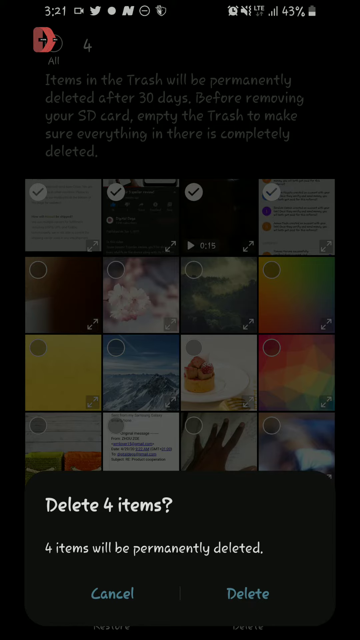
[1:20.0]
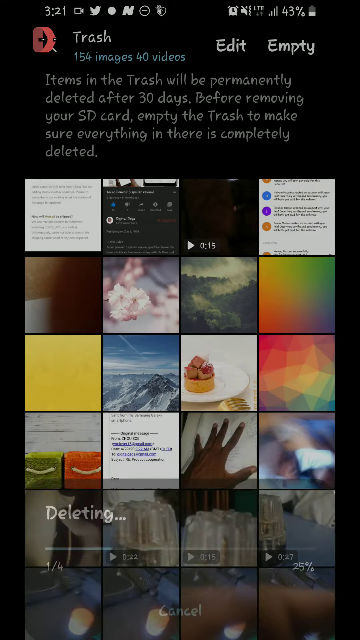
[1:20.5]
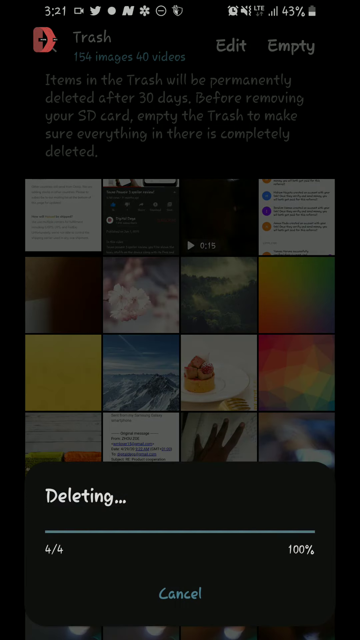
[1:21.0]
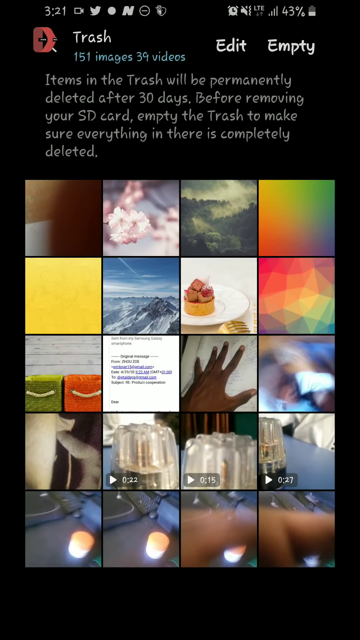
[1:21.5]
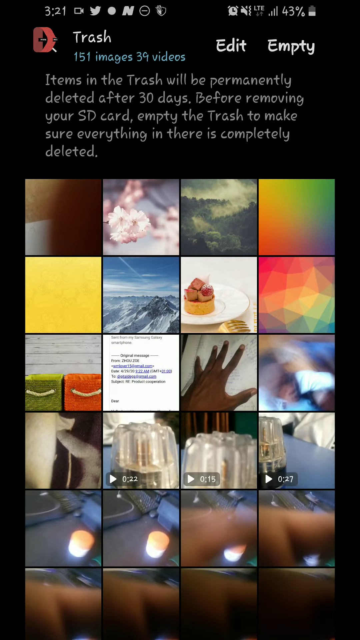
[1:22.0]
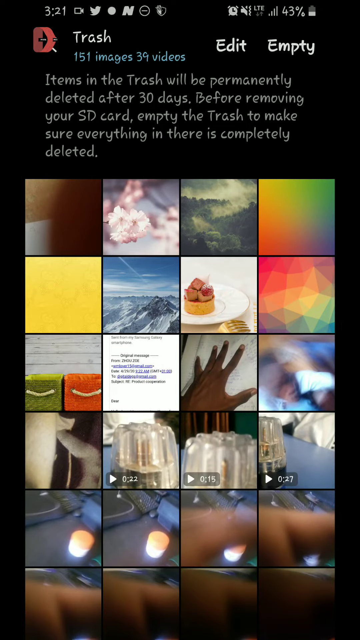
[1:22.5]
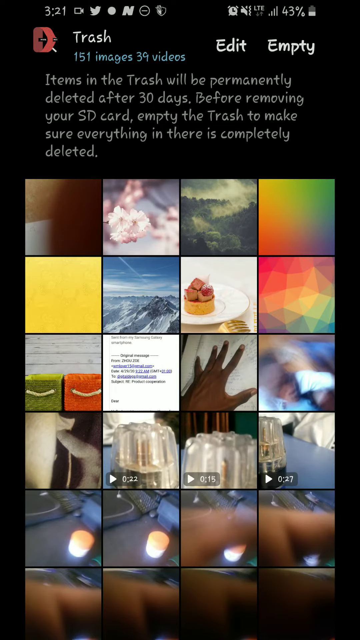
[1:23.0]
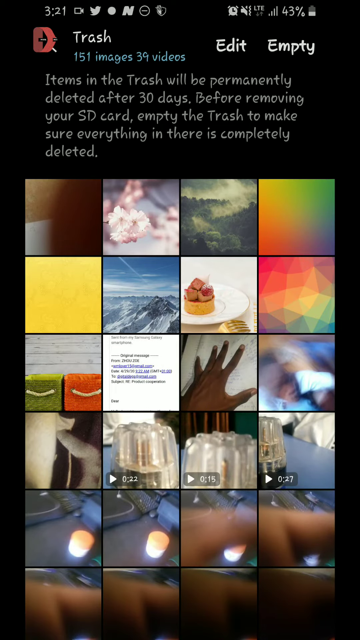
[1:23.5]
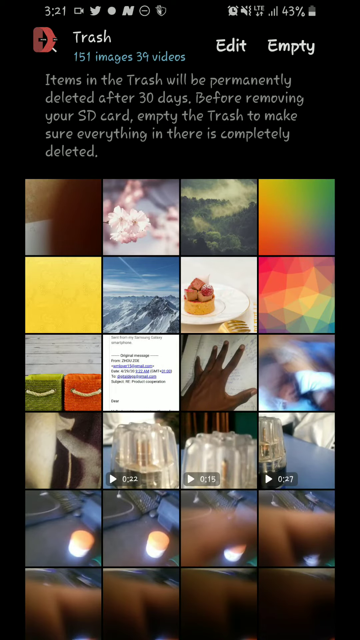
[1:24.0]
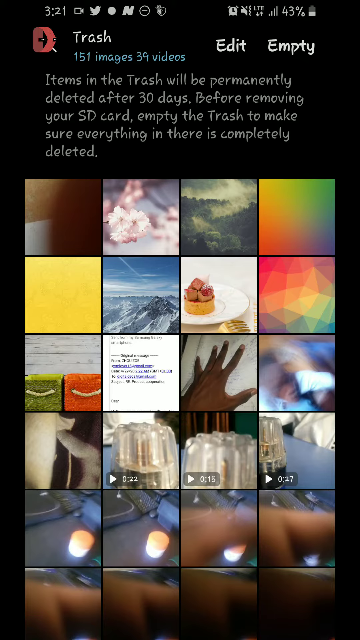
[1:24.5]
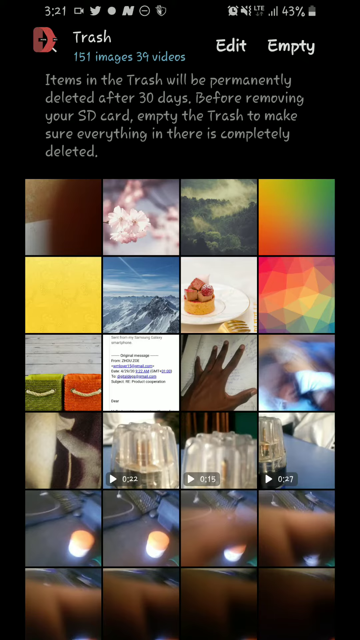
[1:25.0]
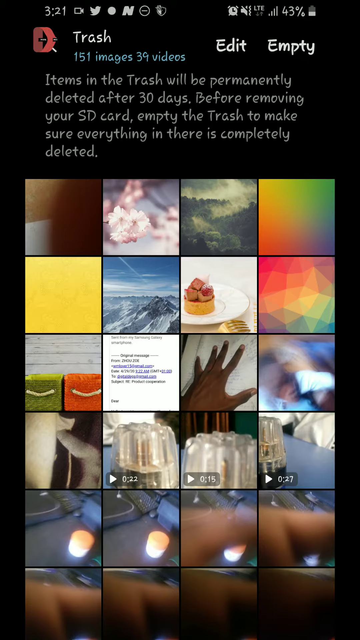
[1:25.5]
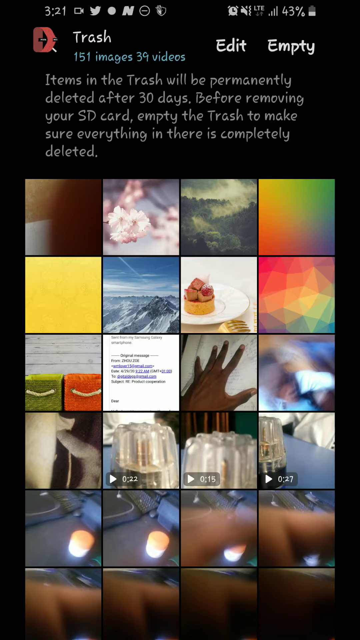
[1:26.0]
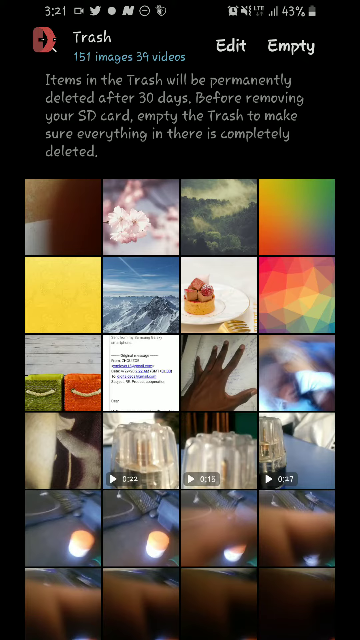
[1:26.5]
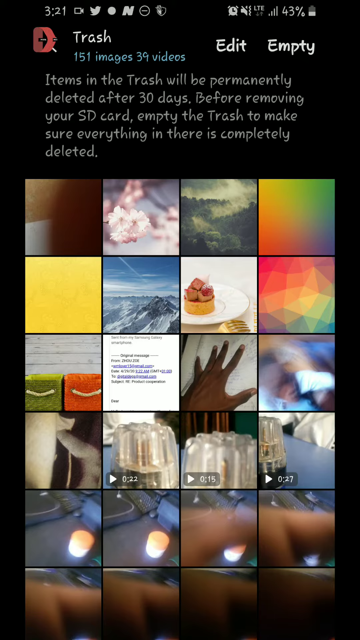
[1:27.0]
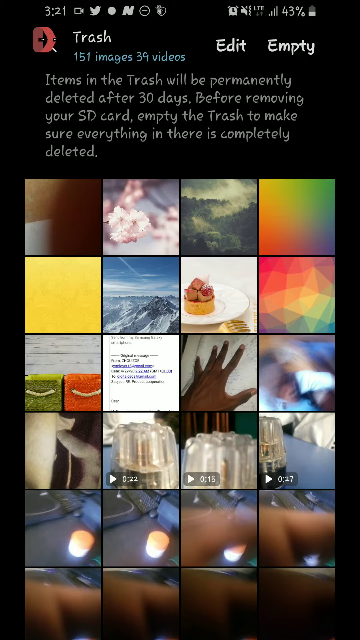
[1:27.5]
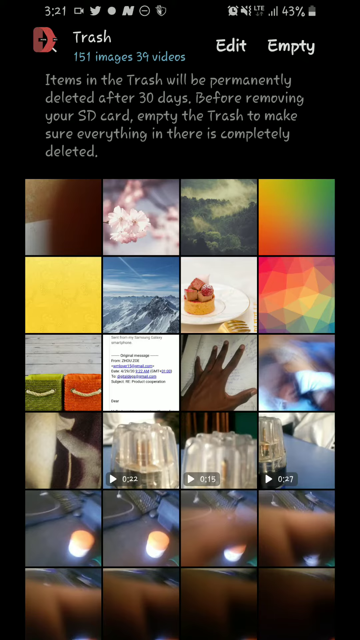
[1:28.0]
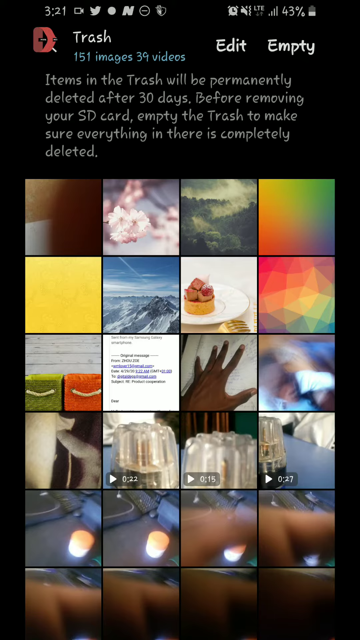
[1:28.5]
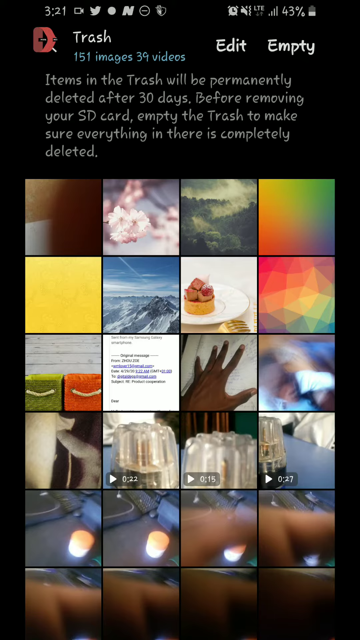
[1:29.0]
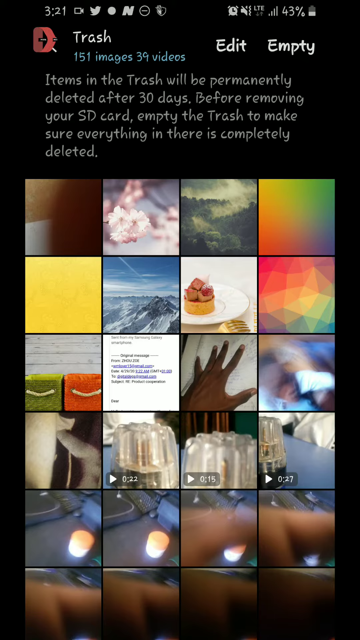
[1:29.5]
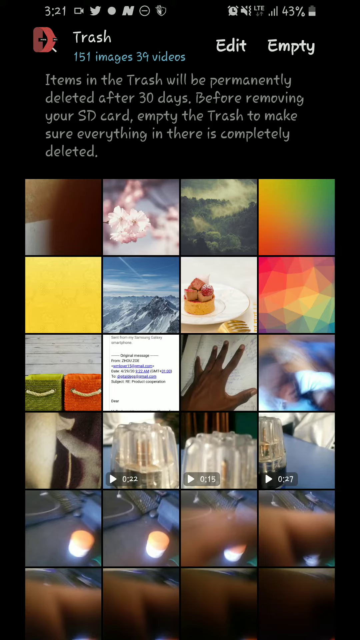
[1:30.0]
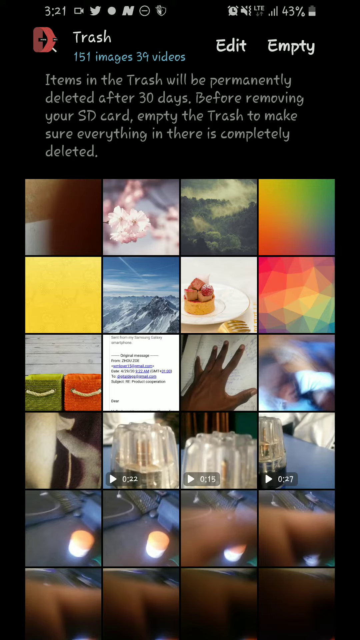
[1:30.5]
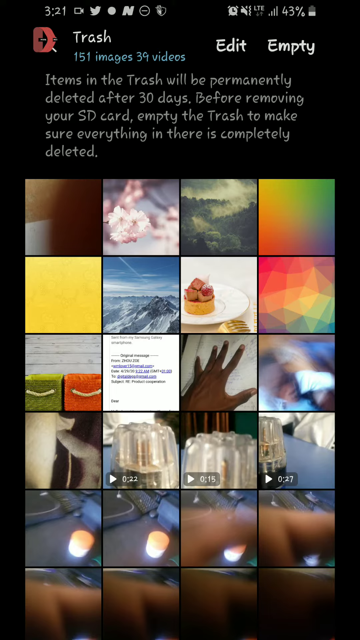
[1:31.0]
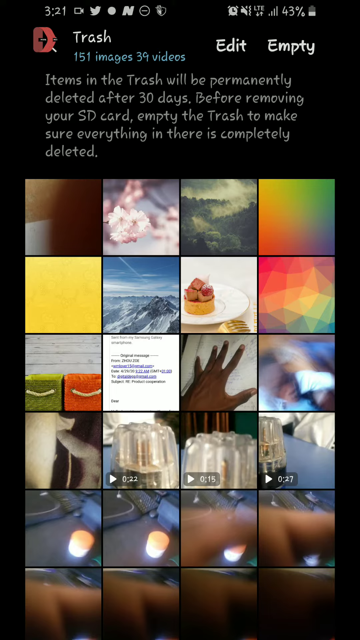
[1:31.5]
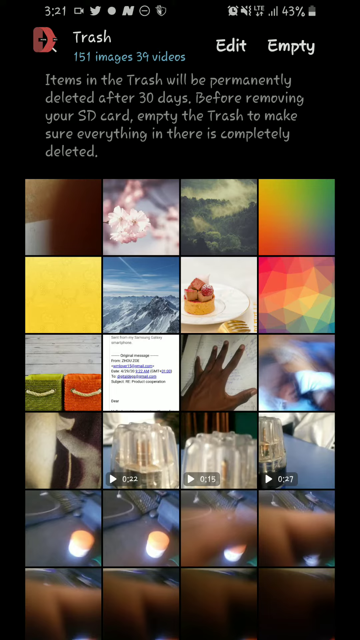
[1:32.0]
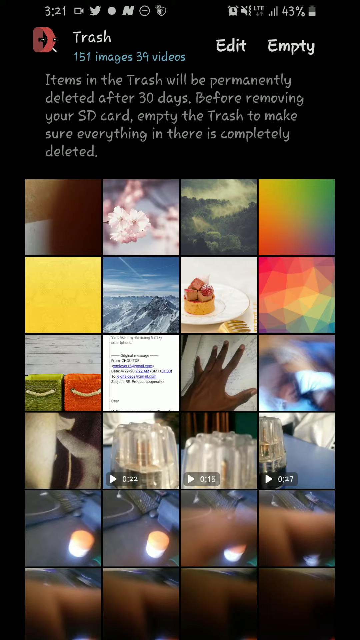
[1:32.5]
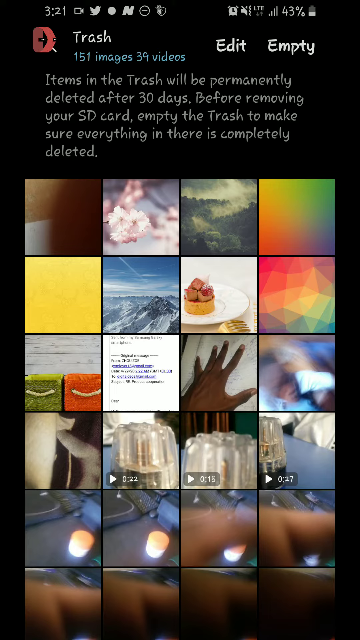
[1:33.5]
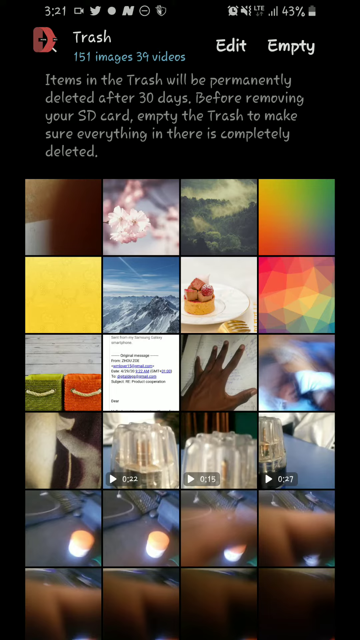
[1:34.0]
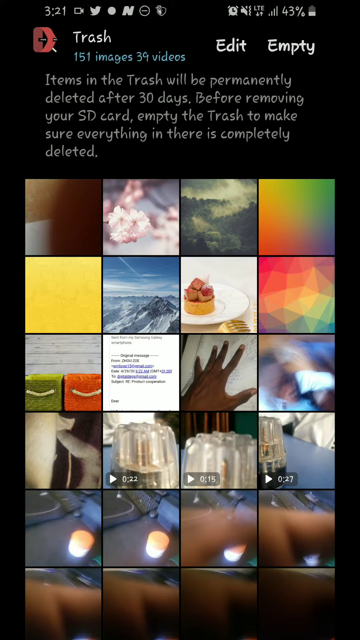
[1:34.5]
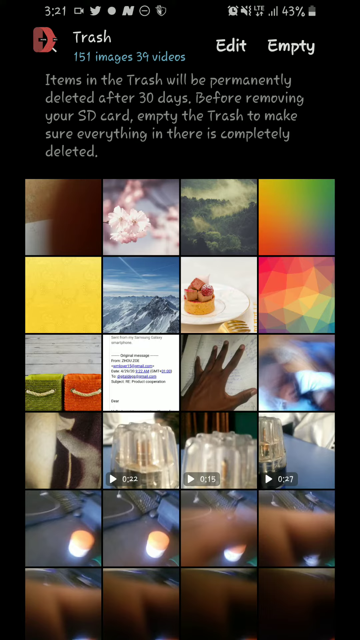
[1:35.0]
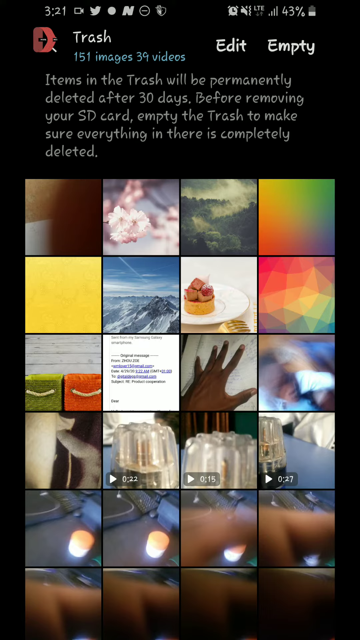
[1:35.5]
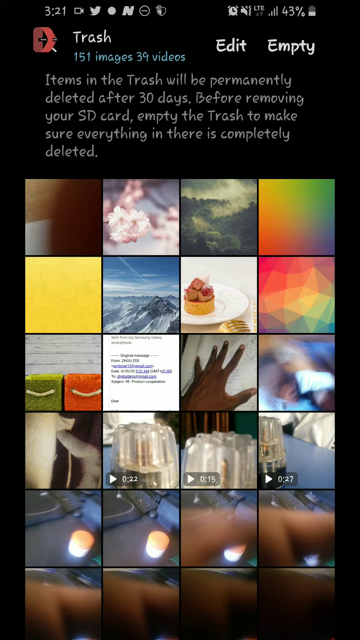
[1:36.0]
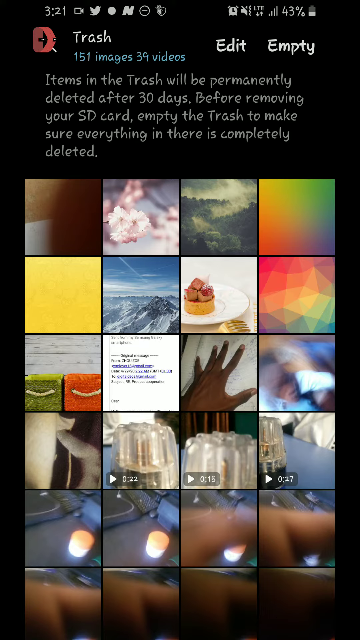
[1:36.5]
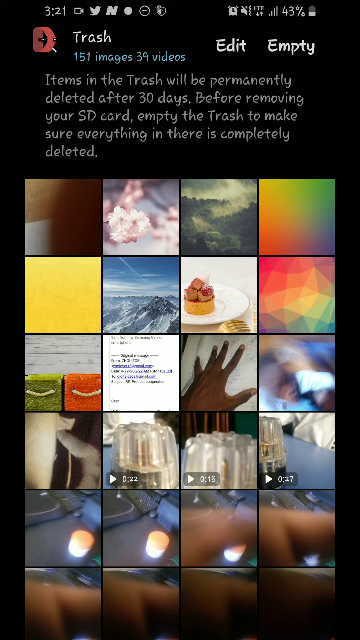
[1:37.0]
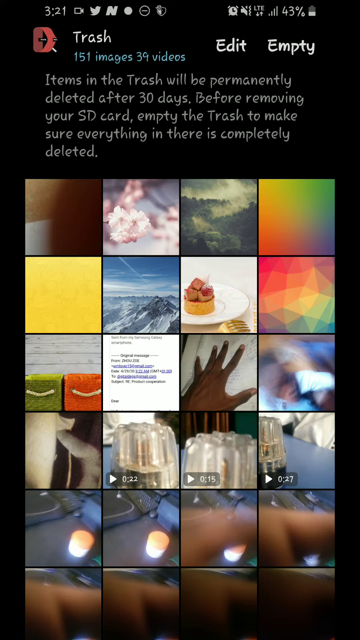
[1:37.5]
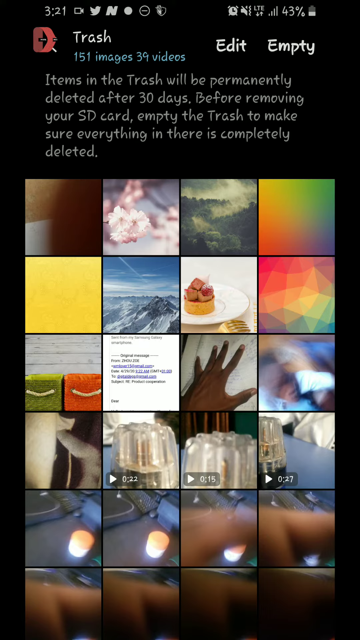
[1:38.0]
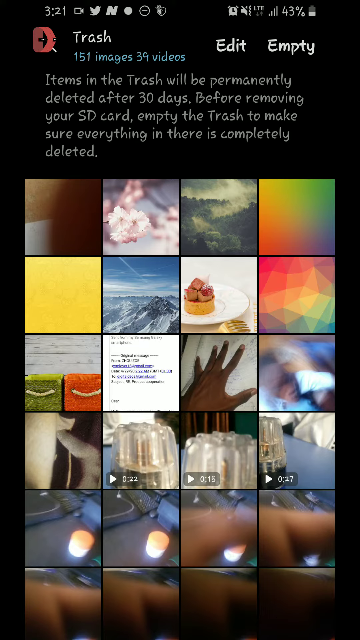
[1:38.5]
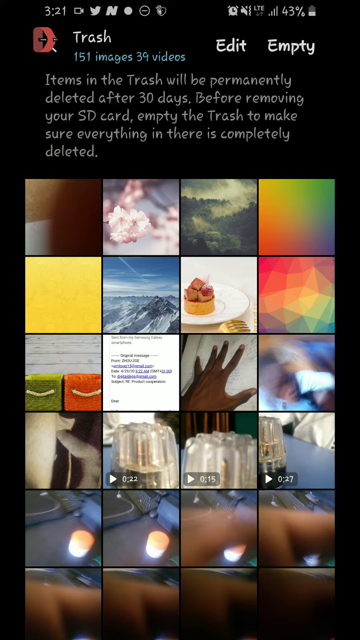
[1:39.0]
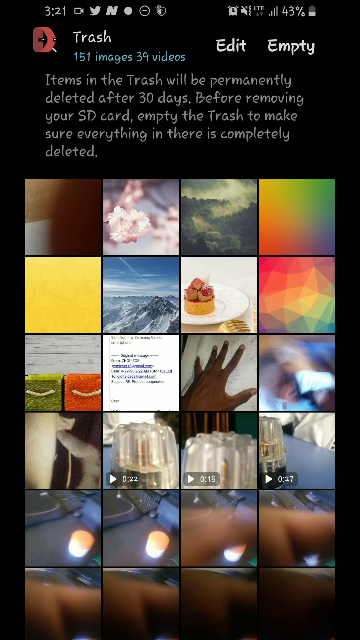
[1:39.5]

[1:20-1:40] After the four files are deleted, the presenter is still inside the trash folder, which shows options to edit or empty the trash. The folder still contains a bunch of files.